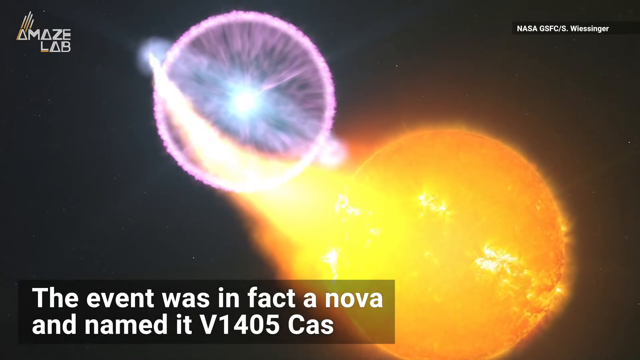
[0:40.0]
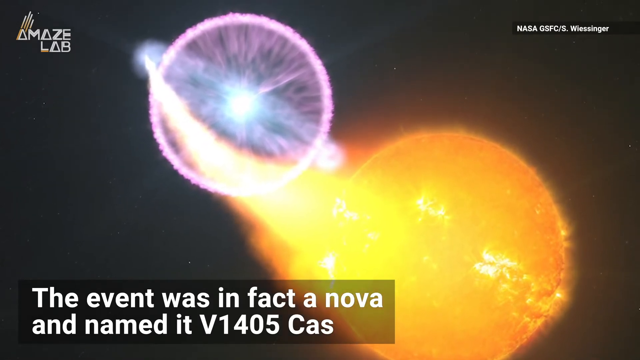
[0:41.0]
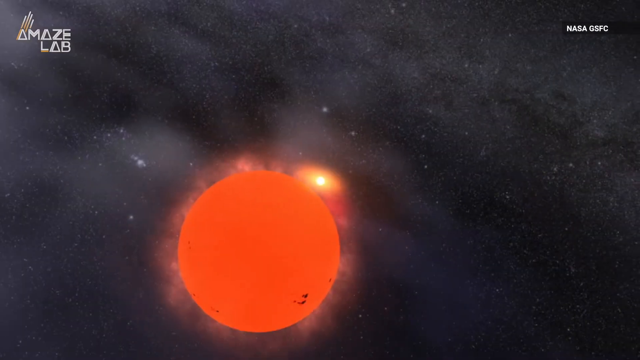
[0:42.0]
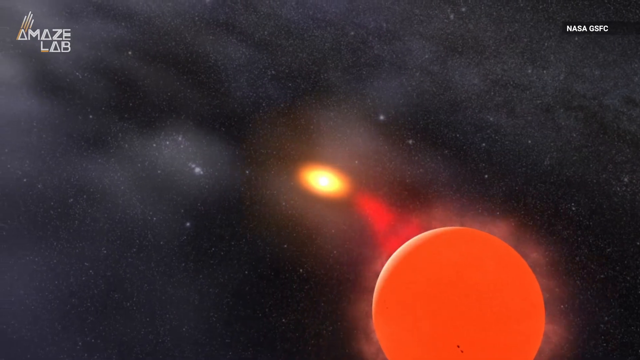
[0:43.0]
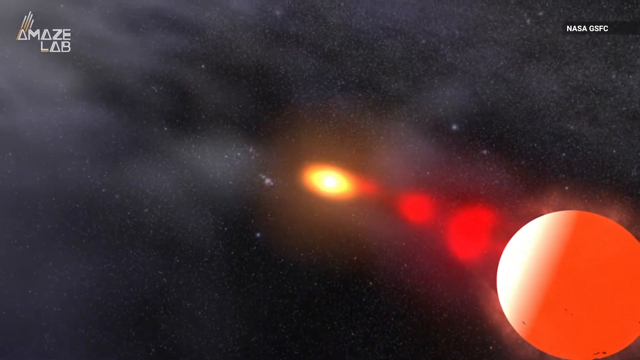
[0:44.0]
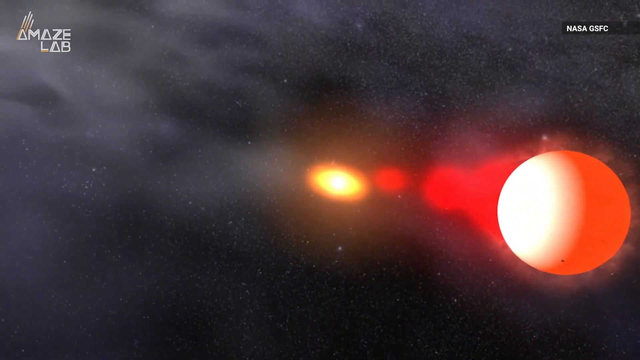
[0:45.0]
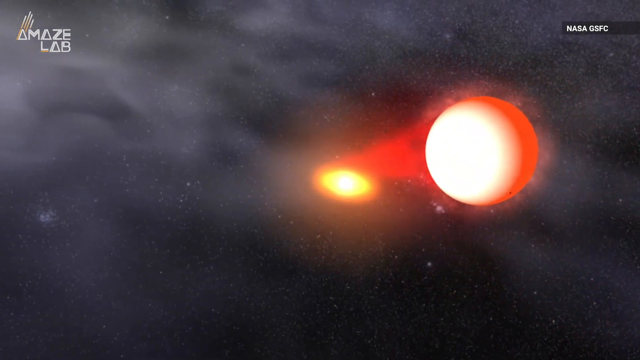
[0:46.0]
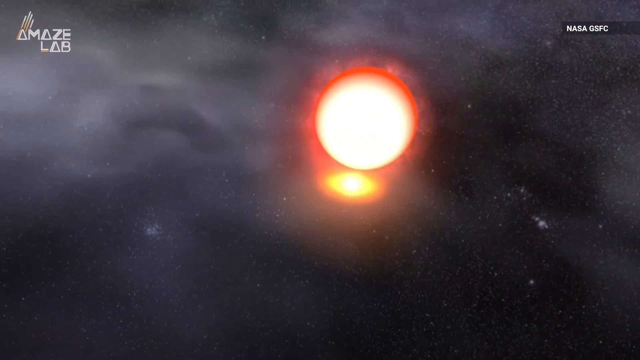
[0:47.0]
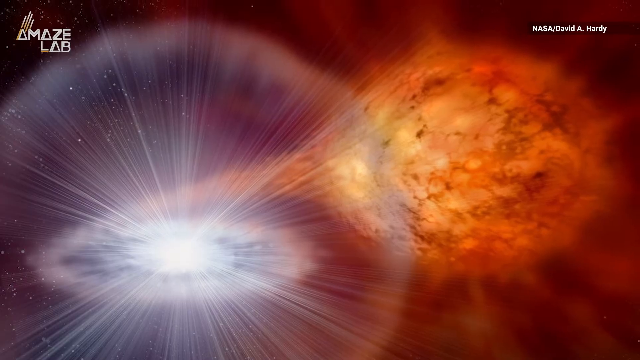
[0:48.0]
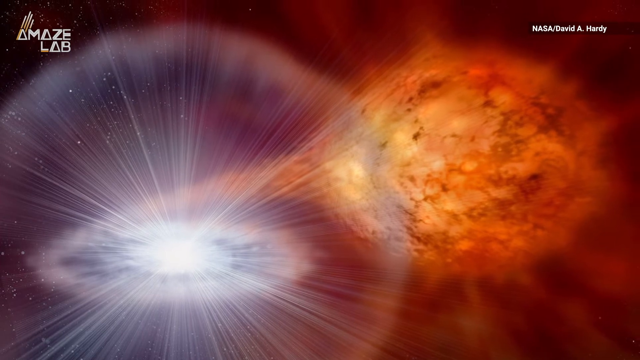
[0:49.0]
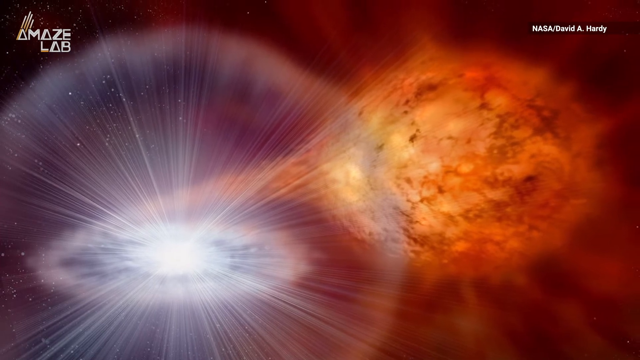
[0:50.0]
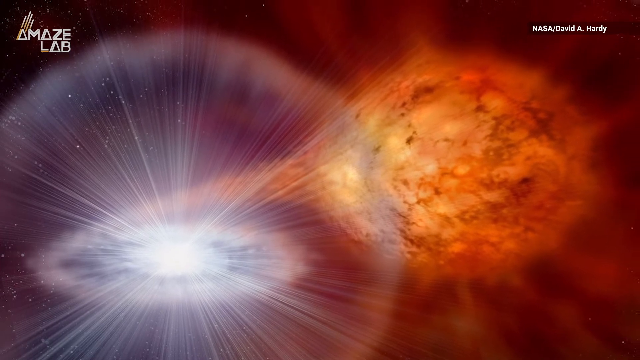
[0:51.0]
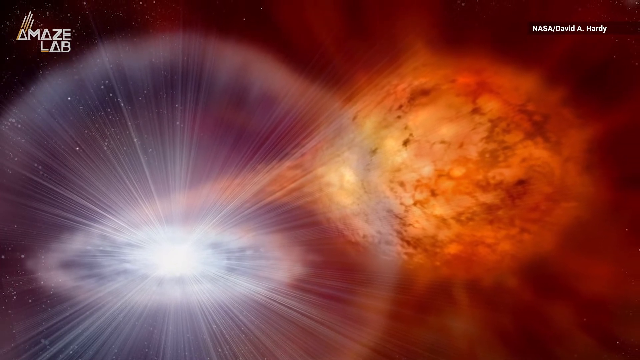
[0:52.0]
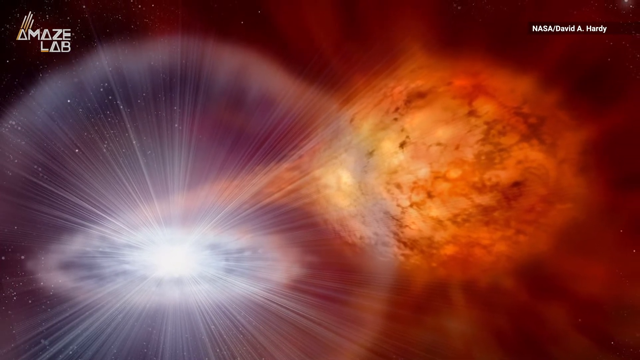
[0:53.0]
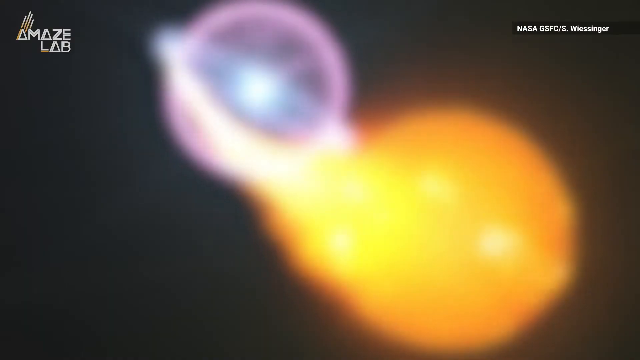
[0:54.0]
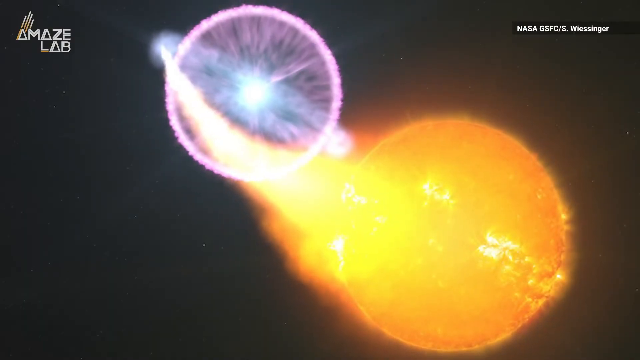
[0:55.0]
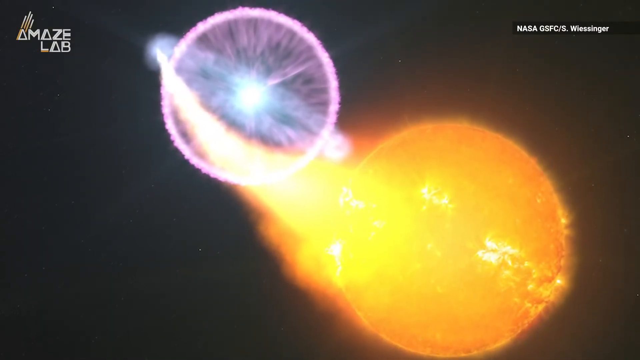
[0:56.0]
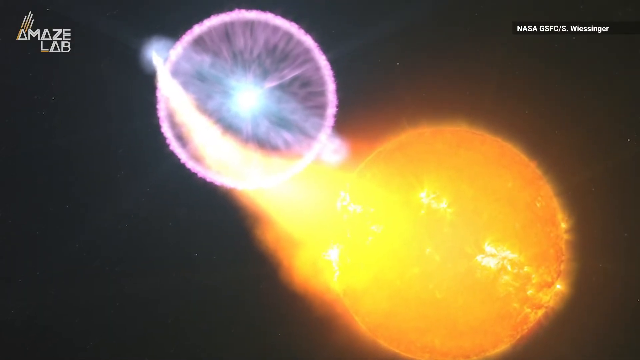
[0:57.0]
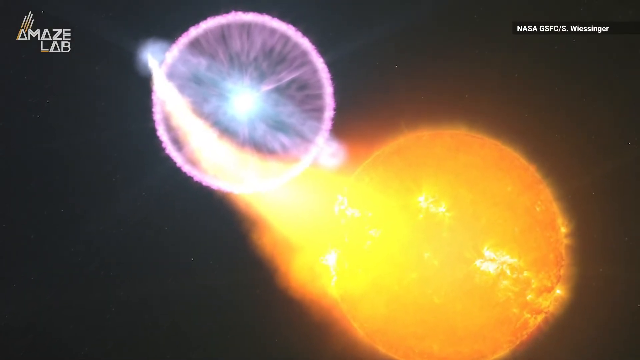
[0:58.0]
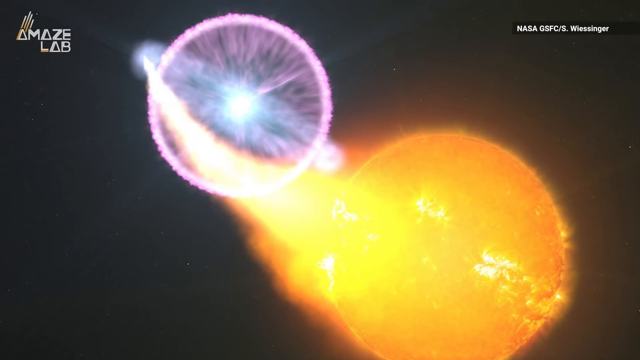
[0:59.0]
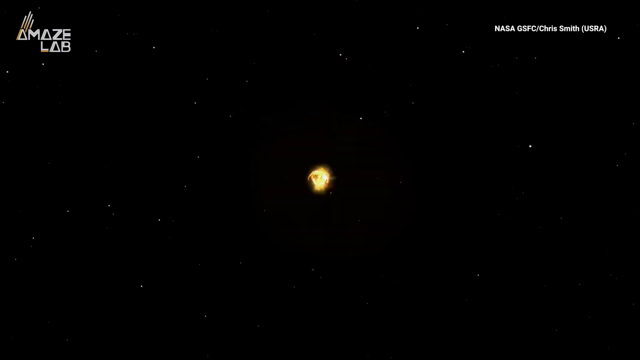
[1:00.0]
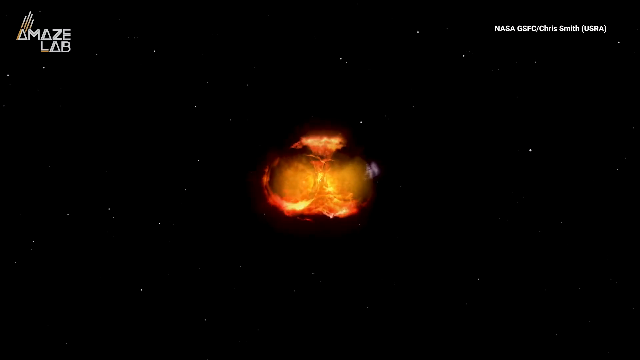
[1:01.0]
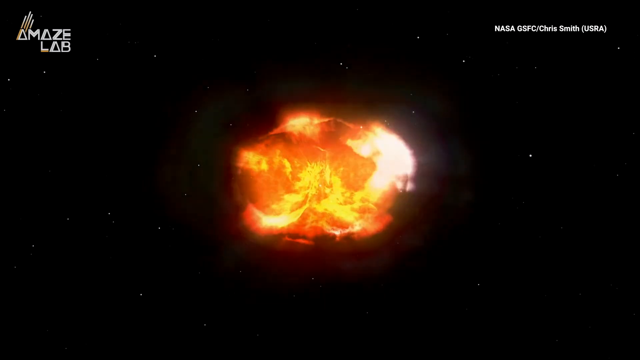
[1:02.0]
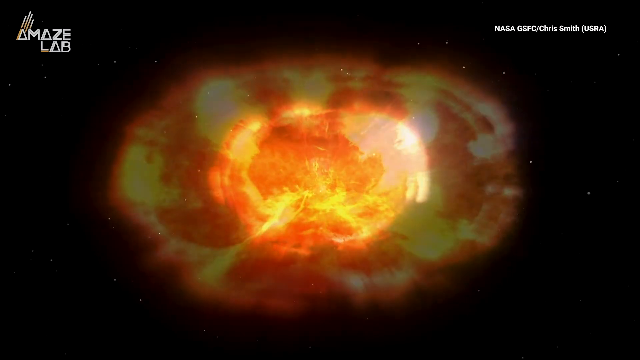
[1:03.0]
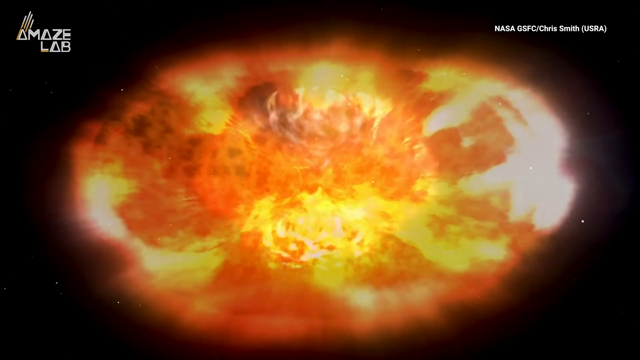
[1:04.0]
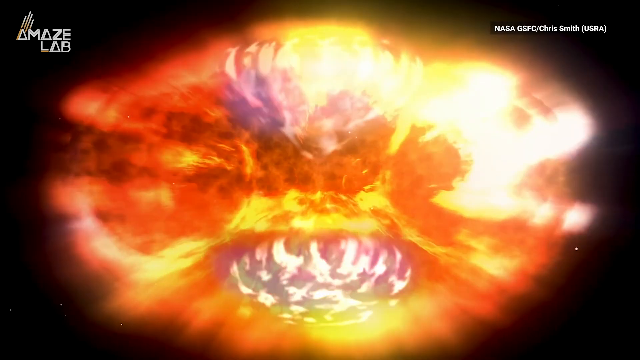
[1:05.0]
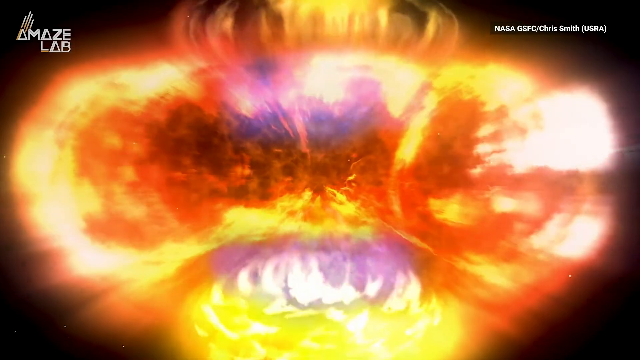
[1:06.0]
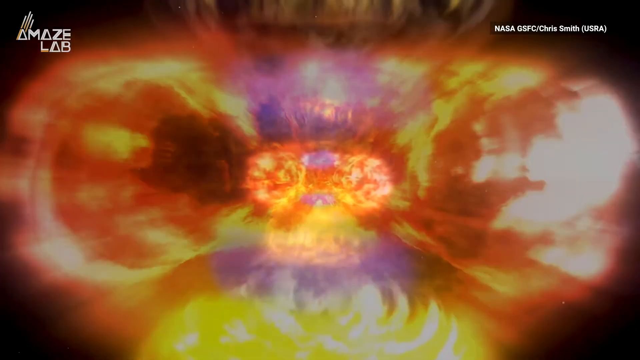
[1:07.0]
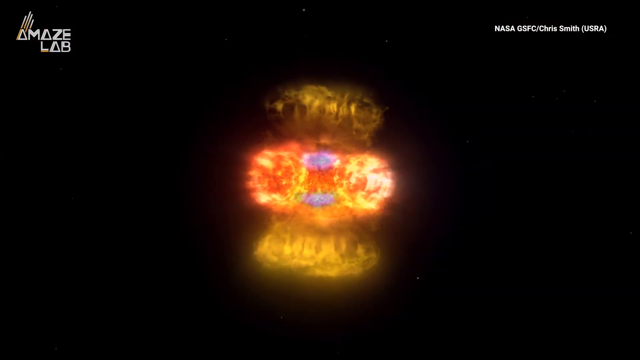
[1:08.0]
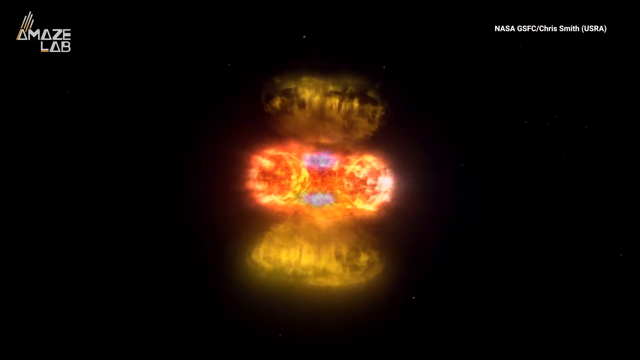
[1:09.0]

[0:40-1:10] An image shows a hot mass surrounded by flames, which appears to be a nova, with text in the bottom corner mentioning that the event was in fact a nova and named it V1405 Cas. A zoomed-in view of it follows, then a sort of simulated view of the nova almost going around the planet, circulating it; as the two get really close, it is almost as if they collide. Another image shows a huge ball of flames with another explosion beside it. Then what looks like a simulation of an explosion in space, a bit like a nuclear bomb going off, creates a massive explosion that fills the entire screen, a bit like a mushroom cloud both upside down and the normal way around. No text accompanies this explosion.